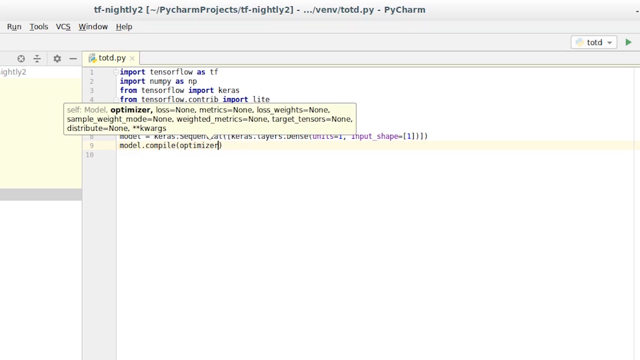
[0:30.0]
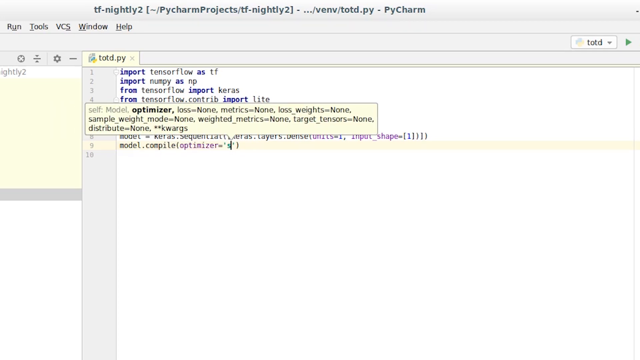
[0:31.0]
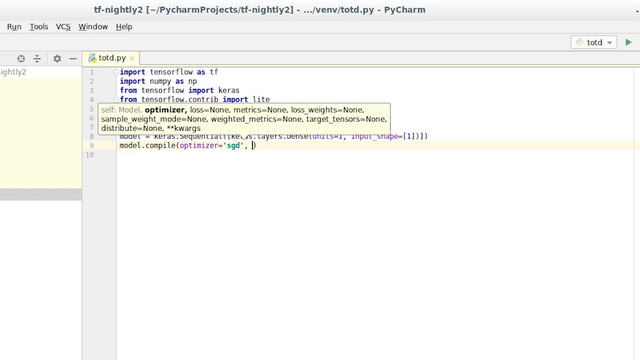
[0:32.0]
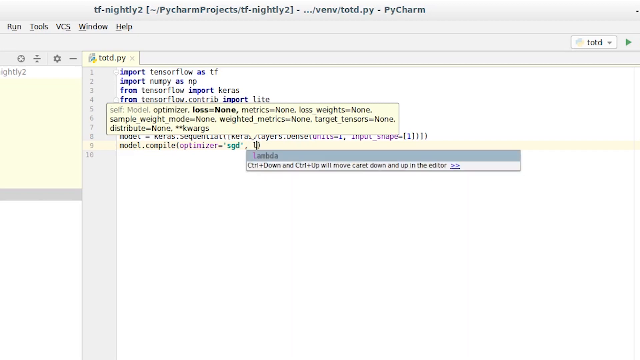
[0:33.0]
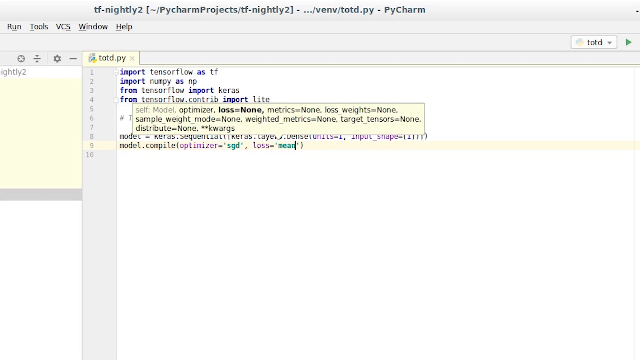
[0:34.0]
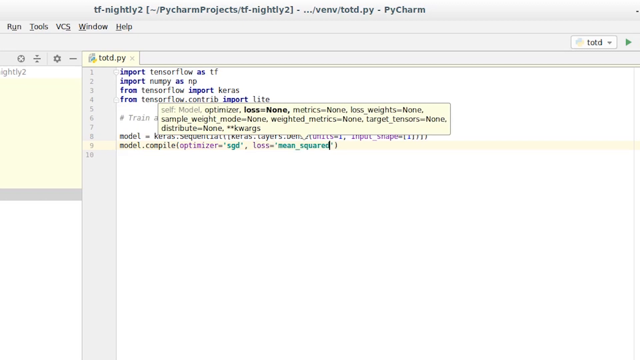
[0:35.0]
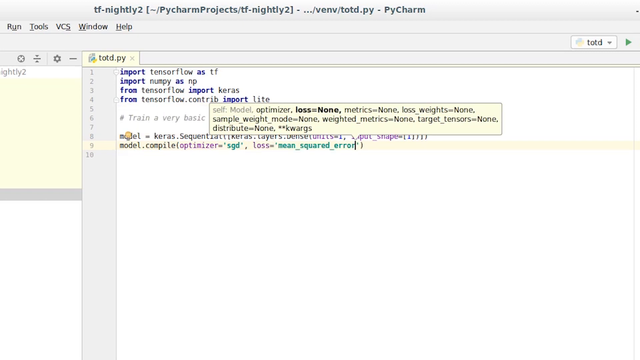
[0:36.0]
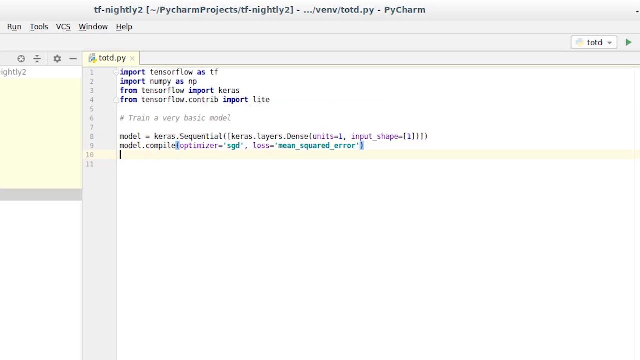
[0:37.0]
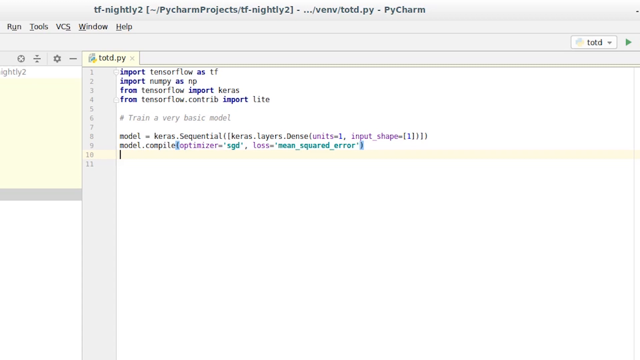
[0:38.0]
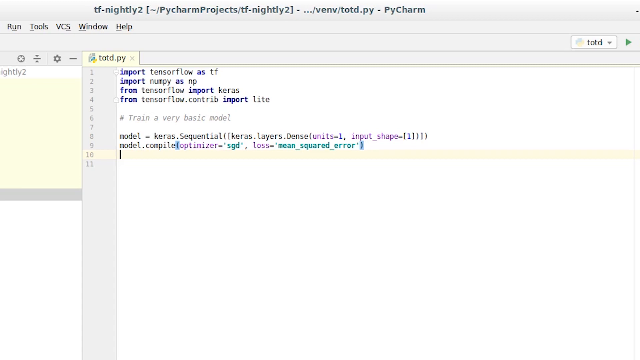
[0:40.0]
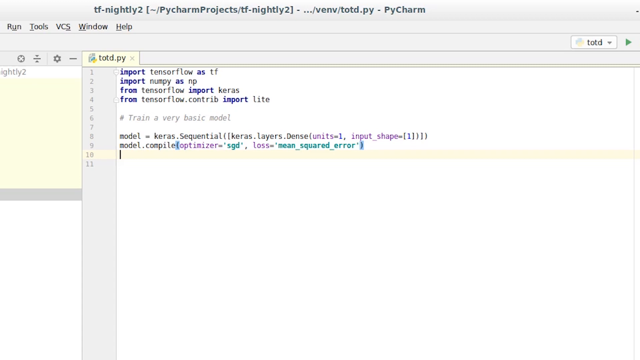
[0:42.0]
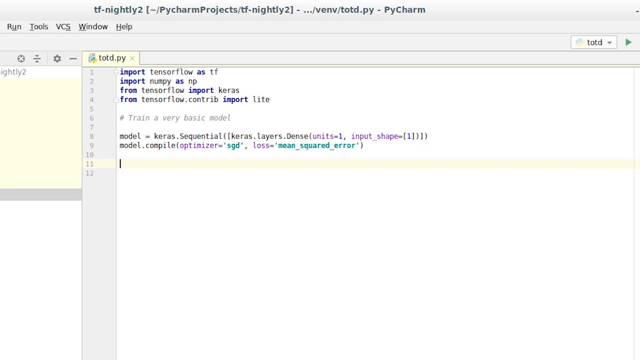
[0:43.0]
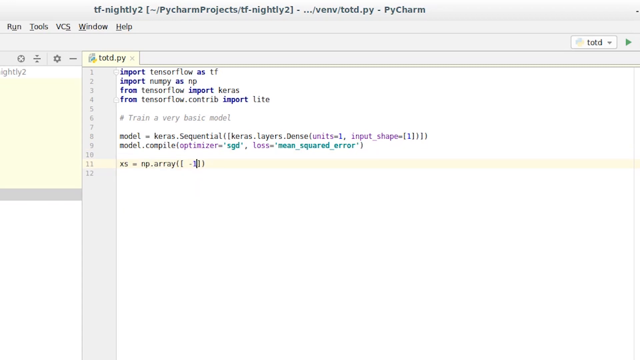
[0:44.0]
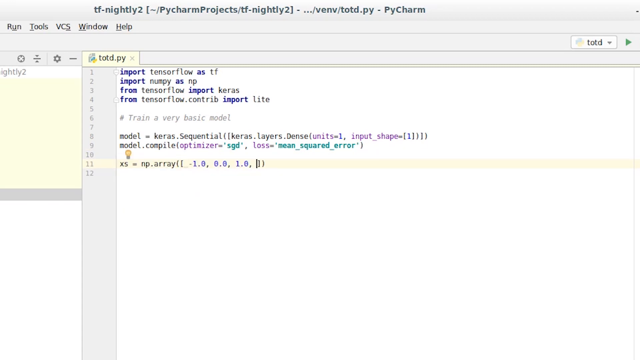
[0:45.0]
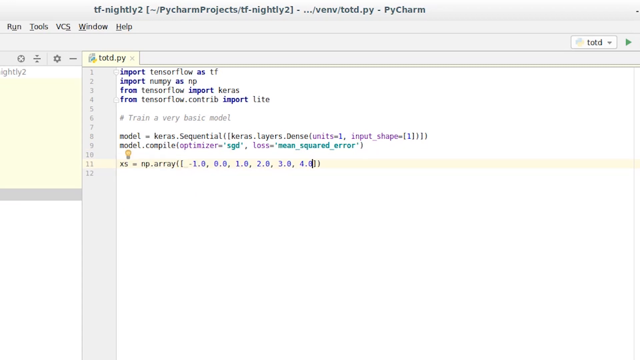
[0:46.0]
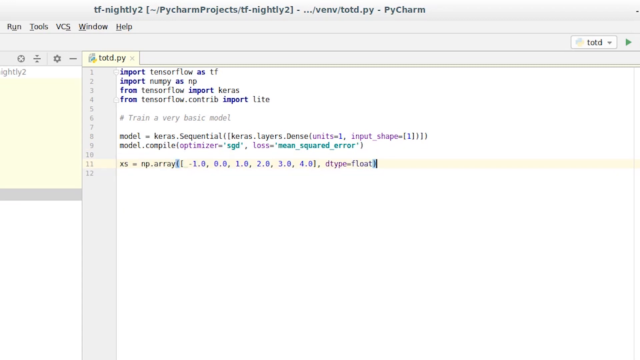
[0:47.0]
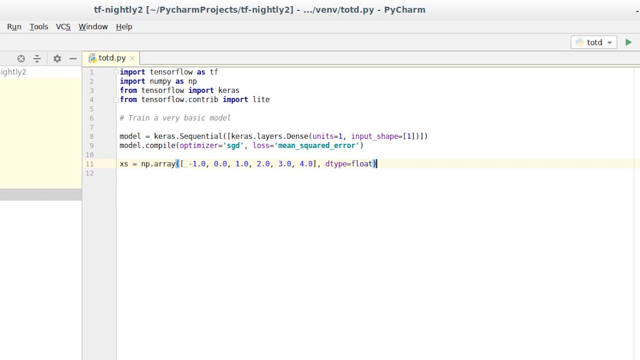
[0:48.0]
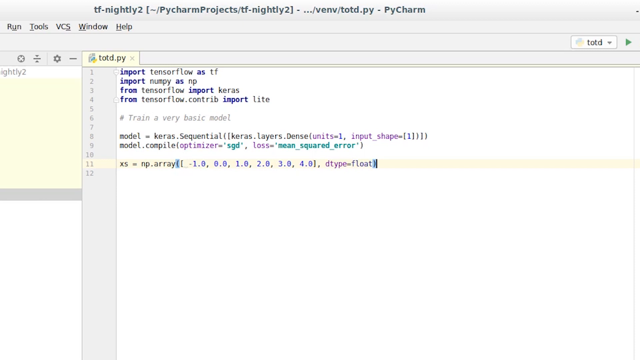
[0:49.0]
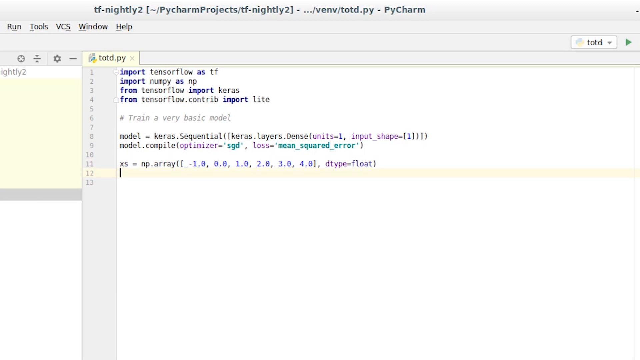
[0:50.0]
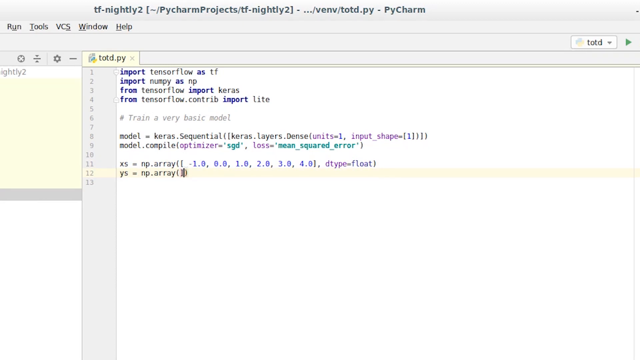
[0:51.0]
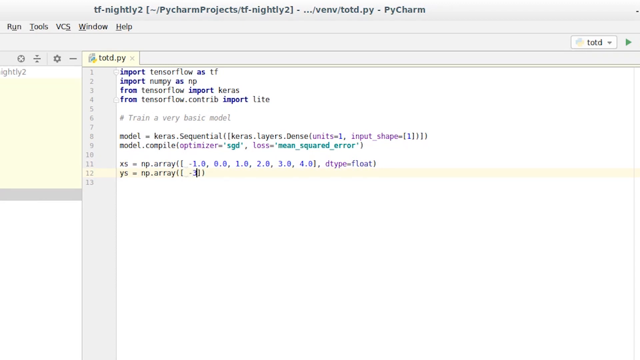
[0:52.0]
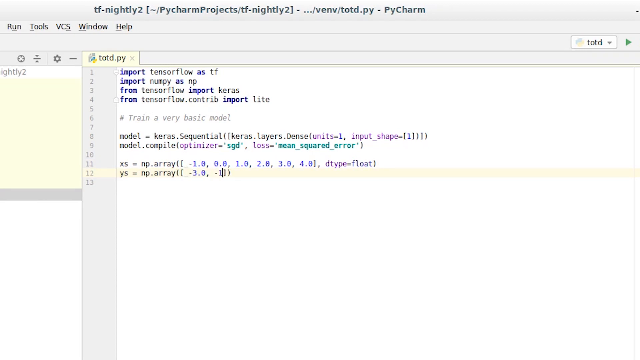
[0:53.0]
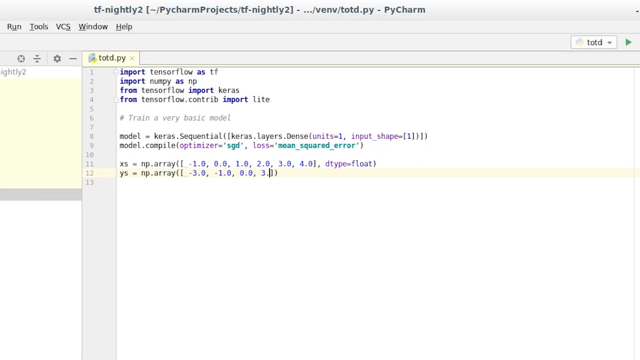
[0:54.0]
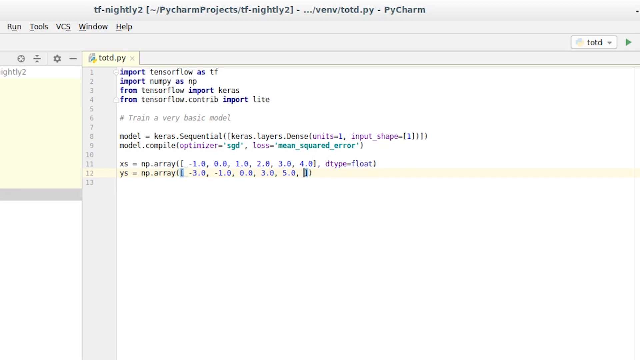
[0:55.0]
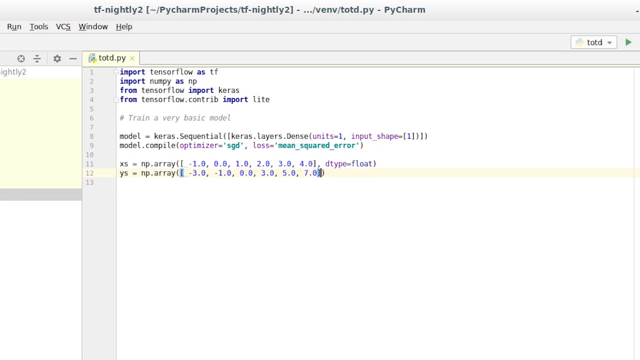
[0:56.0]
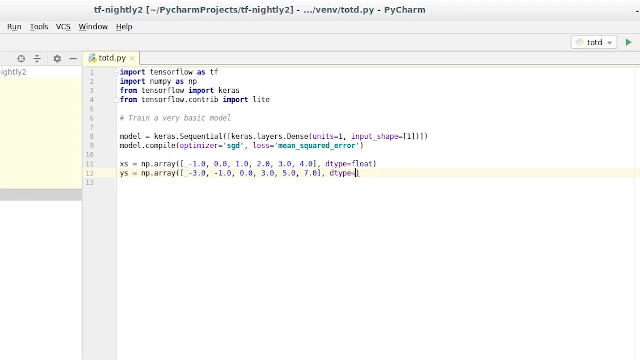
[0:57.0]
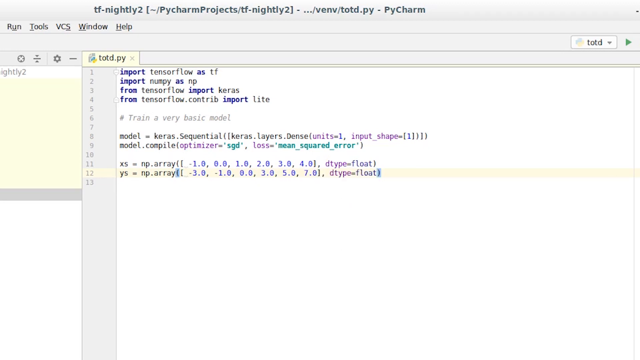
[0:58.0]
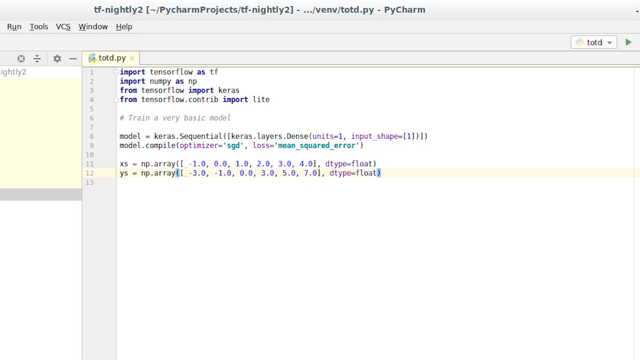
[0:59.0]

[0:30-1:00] Someone is on a document page or web page showing the code "import tensorflow as tf" and "import numpy as np." They type more code involving Keras, including a model compile line with "optimizer SGD" and a loss of mean square error. They then type more, including "np.array" with the numbers 3.0 and 1.0. The code and numbers appear in different colors.